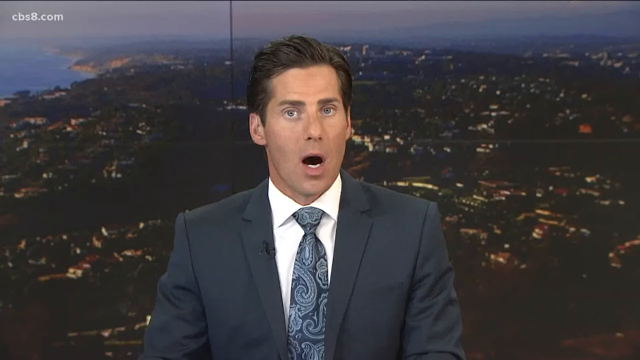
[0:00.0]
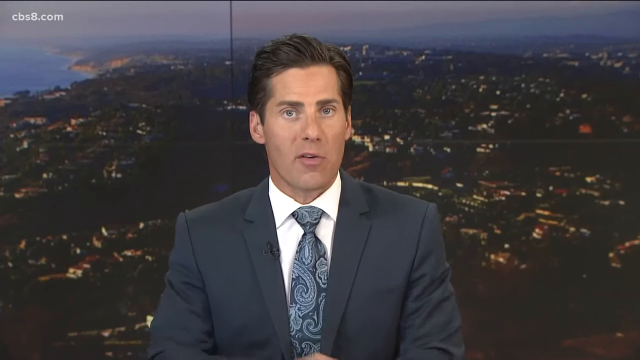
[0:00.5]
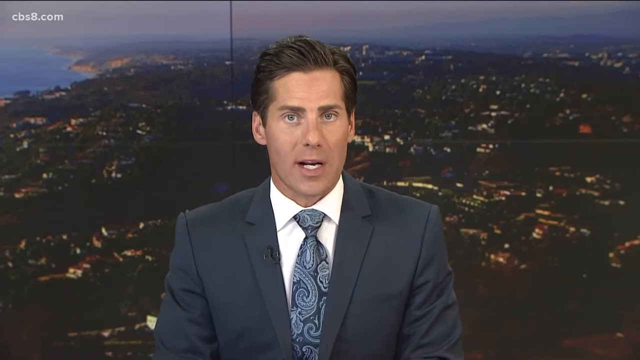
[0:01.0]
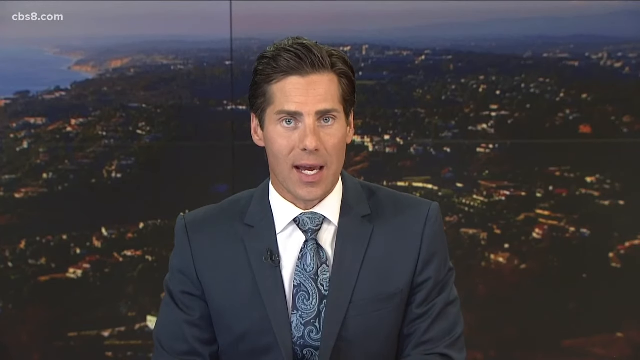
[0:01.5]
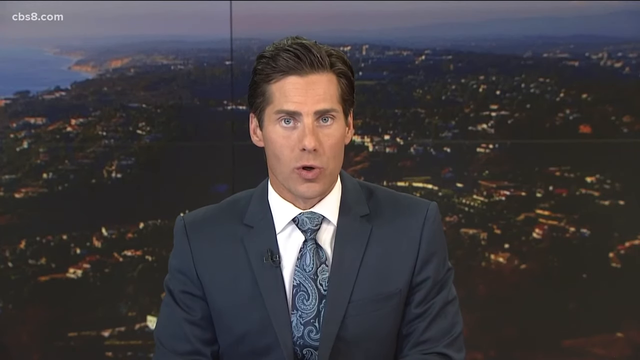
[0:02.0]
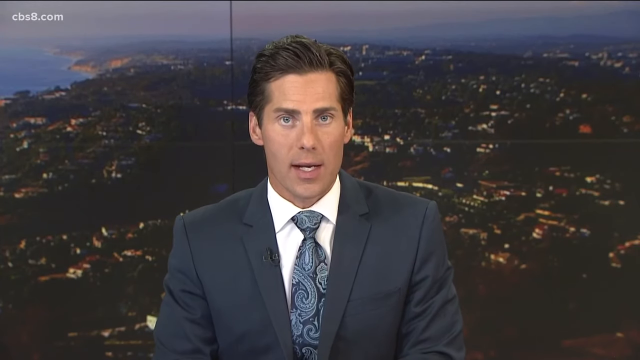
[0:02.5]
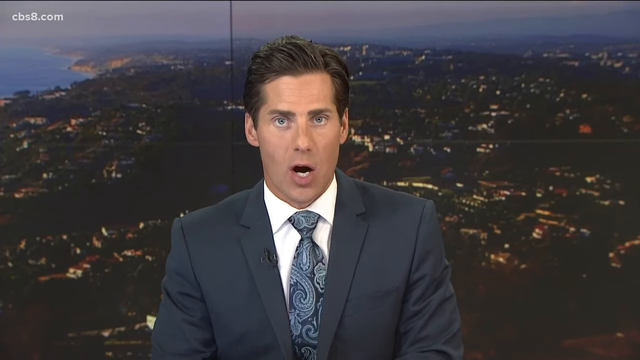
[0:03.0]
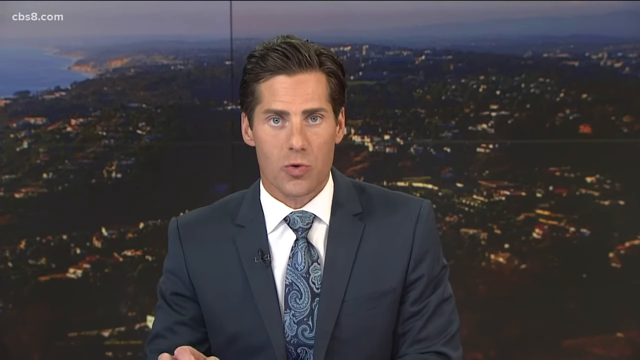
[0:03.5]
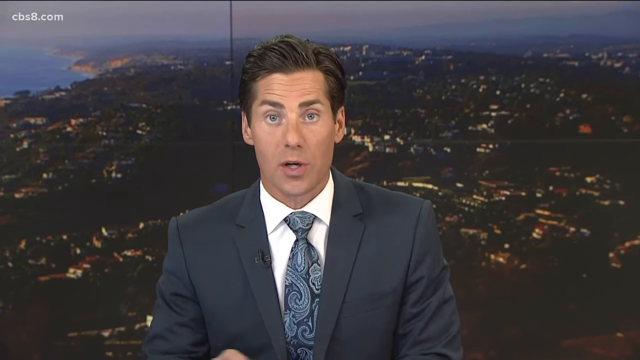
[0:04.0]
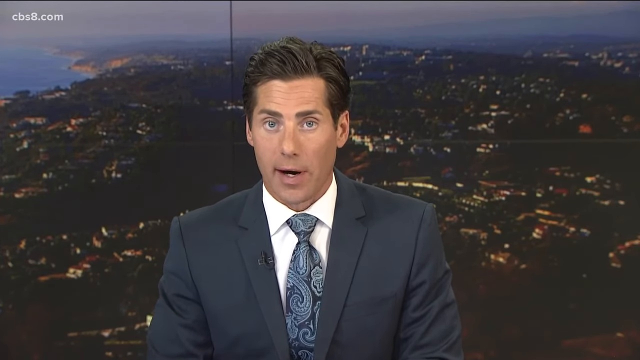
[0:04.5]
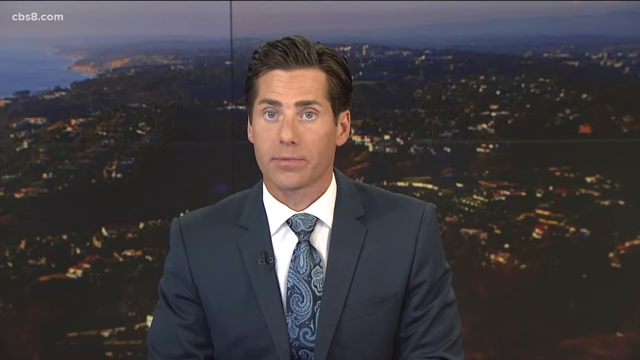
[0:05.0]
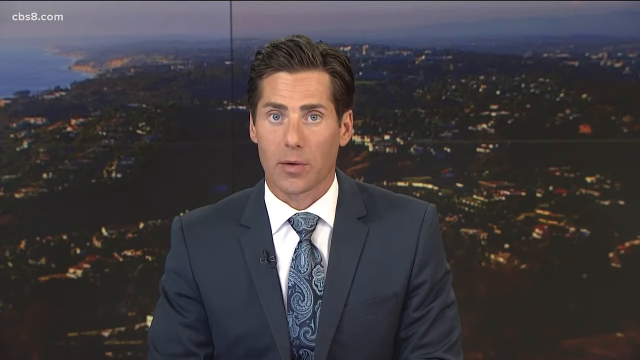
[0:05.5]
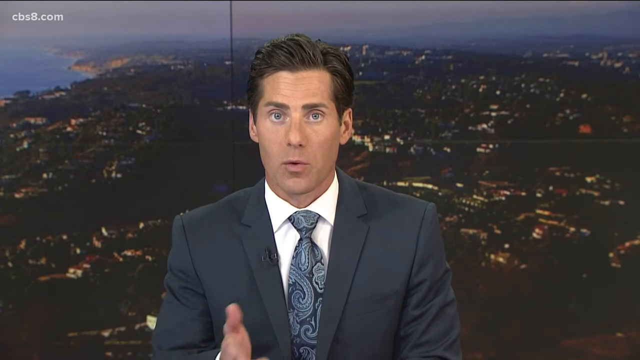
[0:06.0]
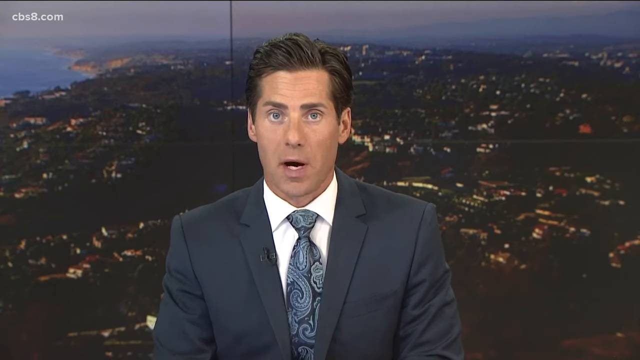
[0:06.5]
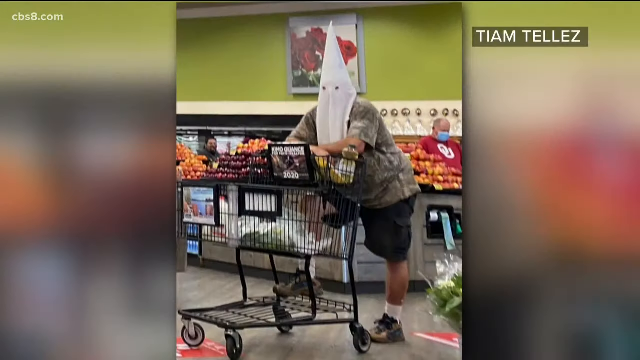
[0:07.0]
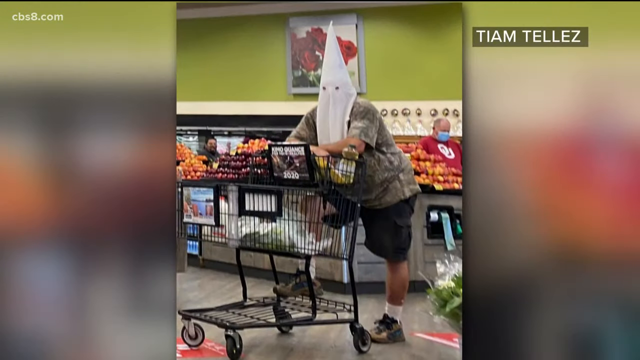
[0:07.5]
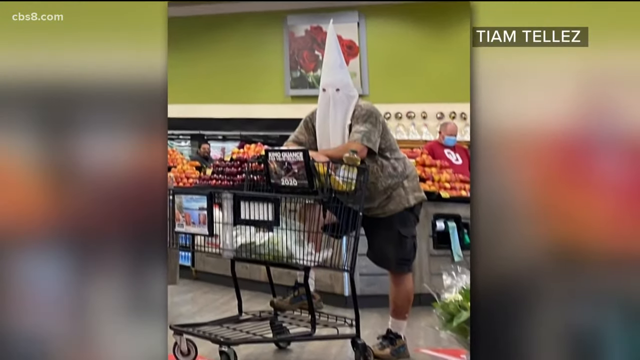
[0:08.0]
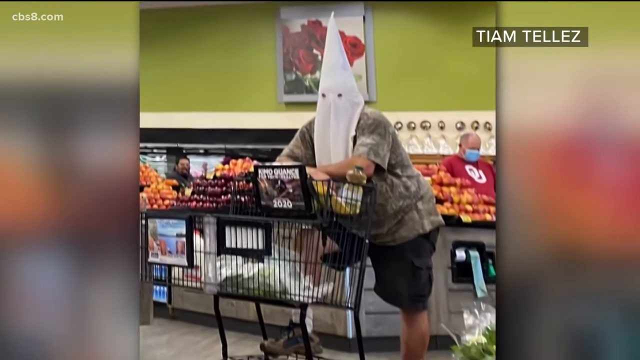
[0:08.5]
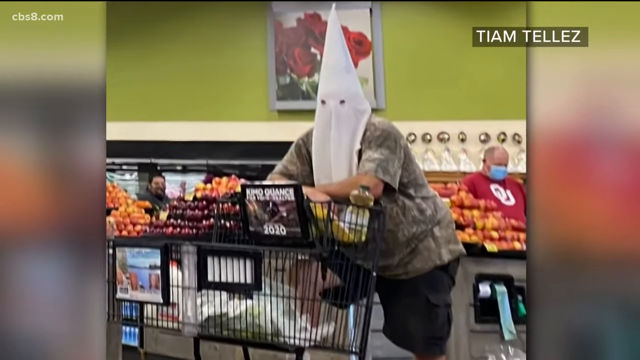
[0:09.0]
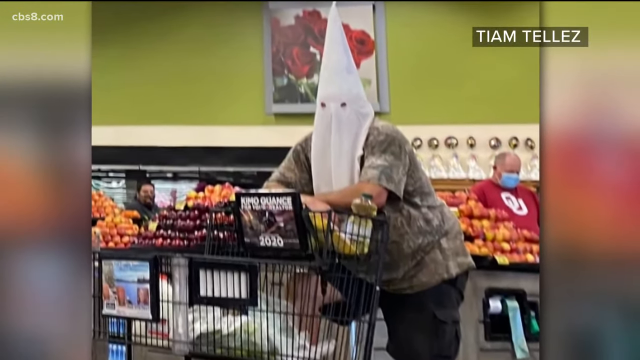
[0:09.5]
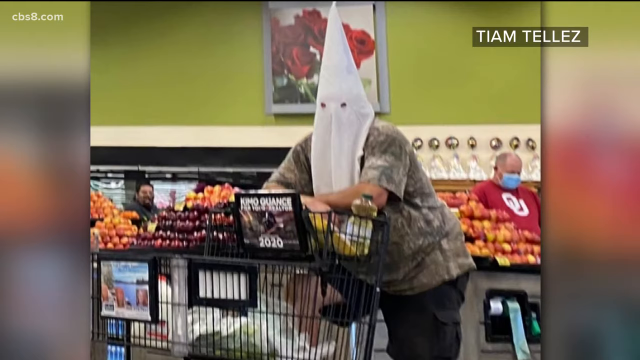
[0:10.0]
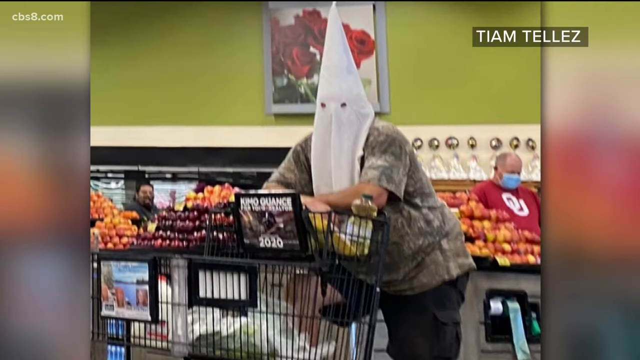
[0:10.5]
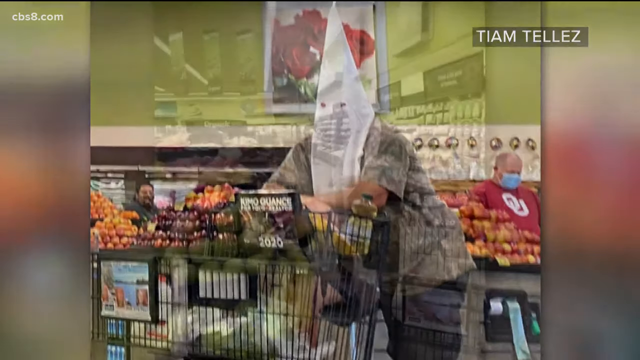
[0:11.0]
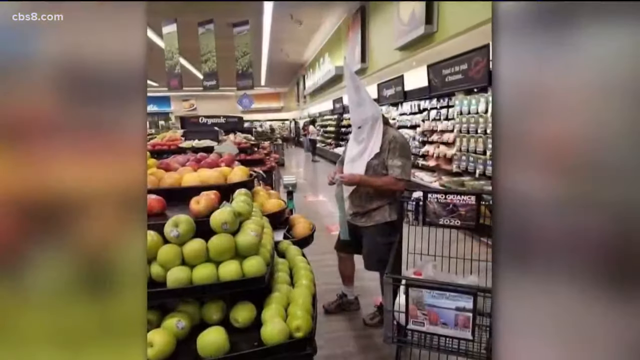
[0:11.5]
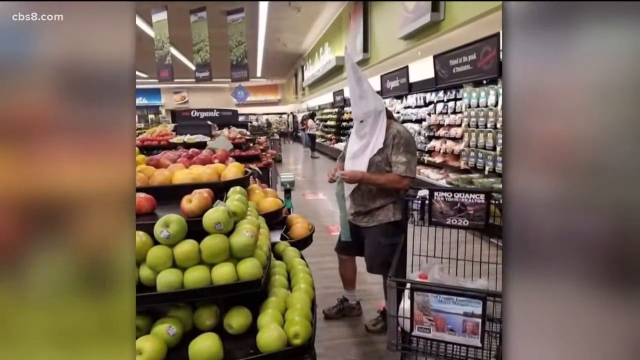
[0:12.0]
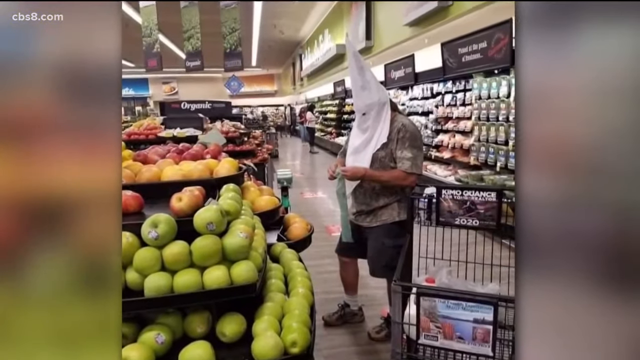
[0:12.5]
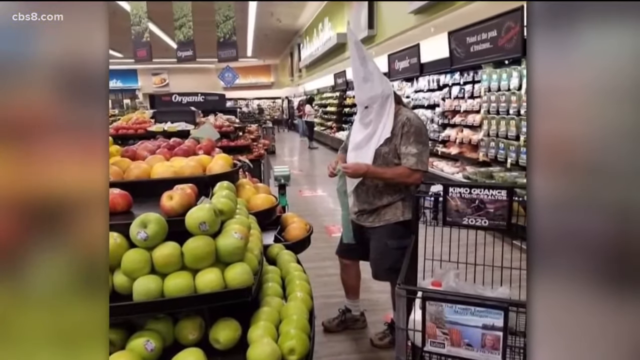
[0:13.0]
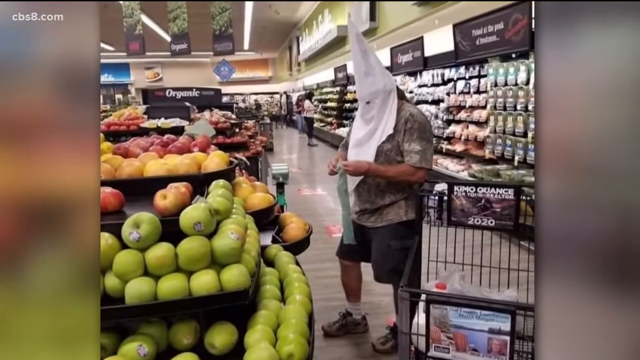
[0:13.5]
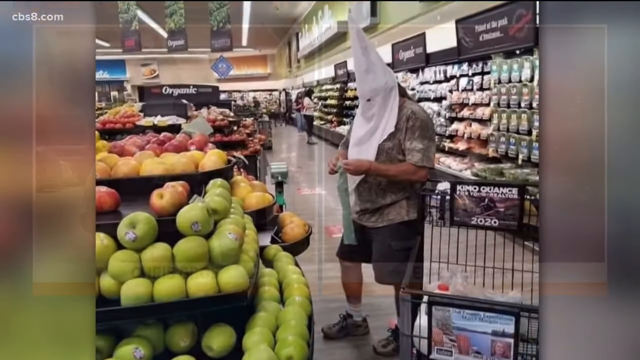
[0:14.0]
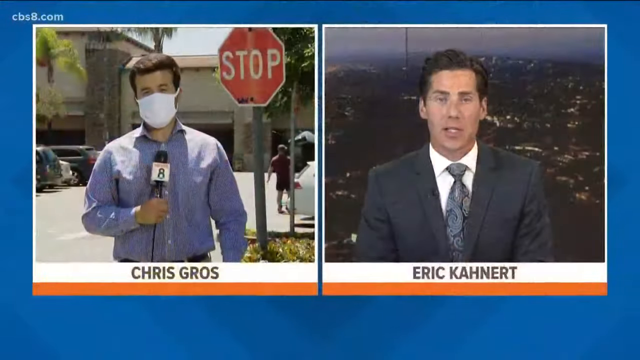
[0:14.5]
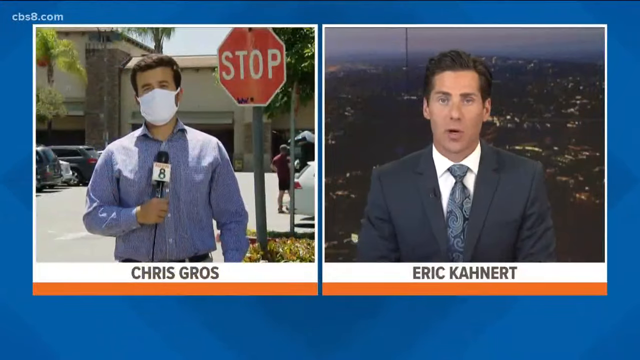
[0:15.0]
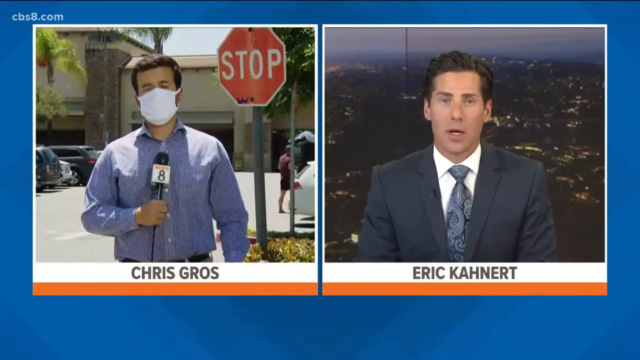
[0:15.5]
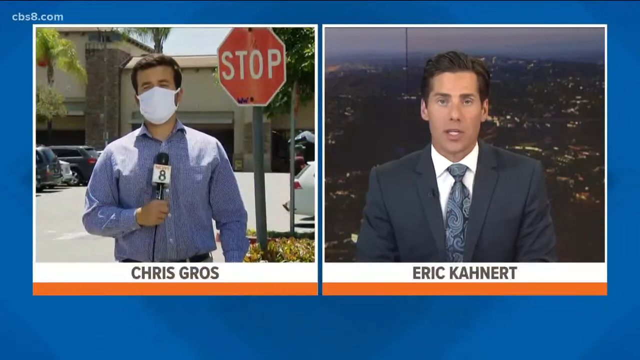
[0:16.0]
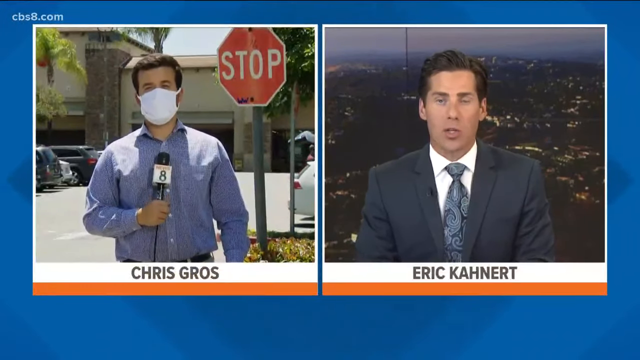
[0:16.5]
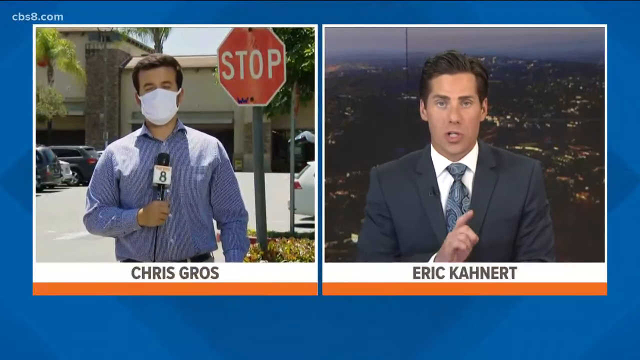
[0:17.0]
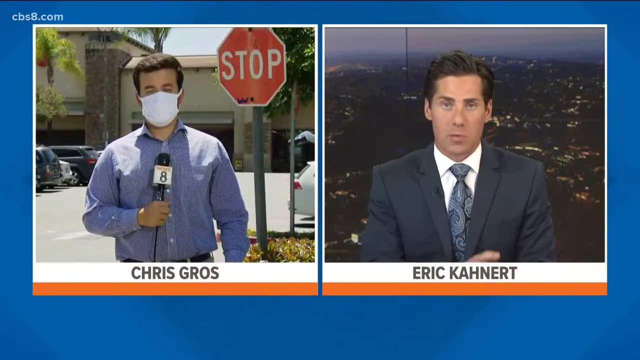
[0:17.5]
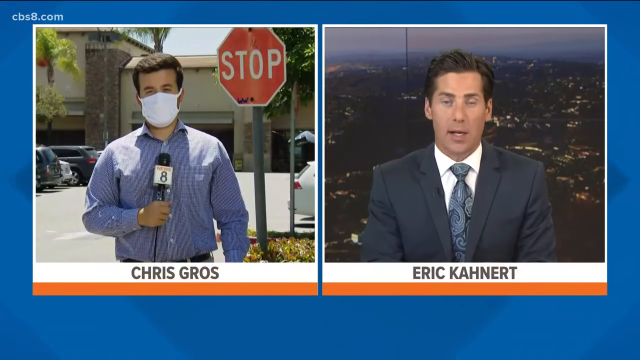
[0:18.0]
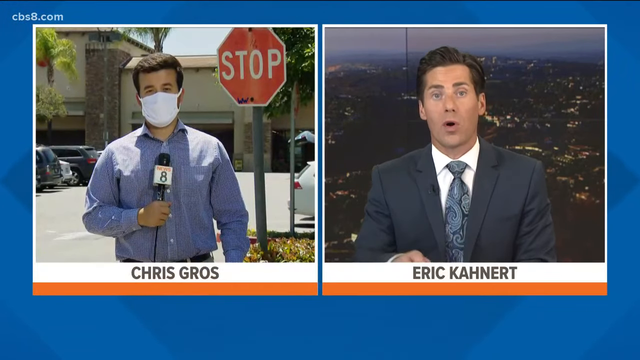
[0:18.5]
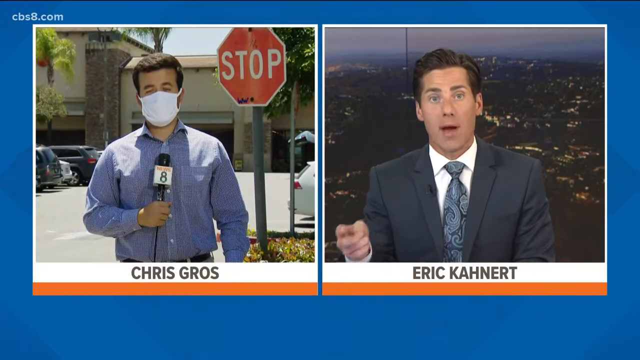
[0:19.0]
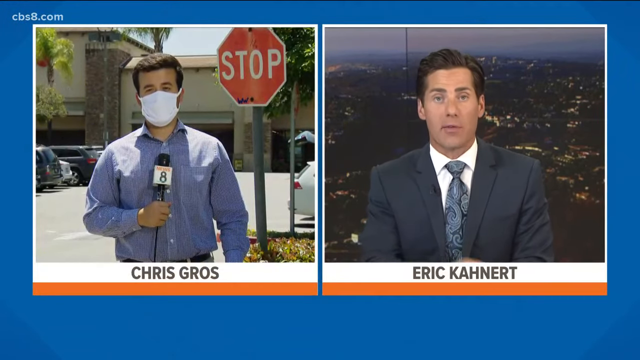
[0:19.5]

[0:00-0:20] The video is from cbs8.com. It opens with a news reporter, a white man in a blue suit jacket, a white collared shirt and a blue tie with swirls on it, talking to the camera in front of a backdrop of an aerial shot of the city. The video then moves to a man in the fruit and vegetable aisle of a grocery store who appears to have a KKK hood on his head. He wears a short-sleeved shirt and shorts and has a buggy in front of him. To his right, behind the fruit, is a man wearing a mask, and there is also a man to his left. The camera zooms in on him, and another shot shows him opening a plastic bag with fruit in it. The video then moves to a shot of a man in a grocery store wearing a blue suit jacket, a white collared shirt and a blue tie with swirls on it. Next, two reporters appear side by side: the one just seen, and another who is outside by a stop sign.